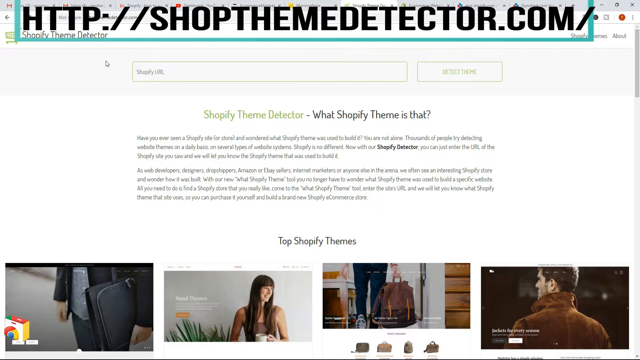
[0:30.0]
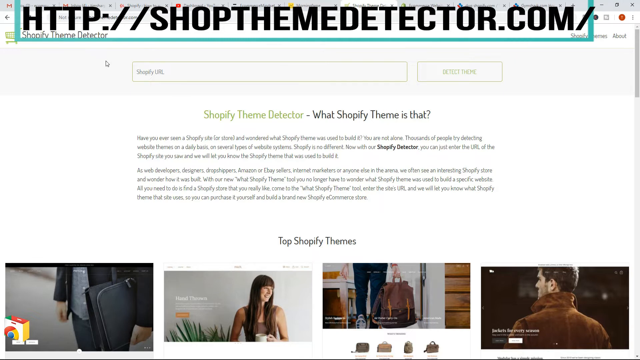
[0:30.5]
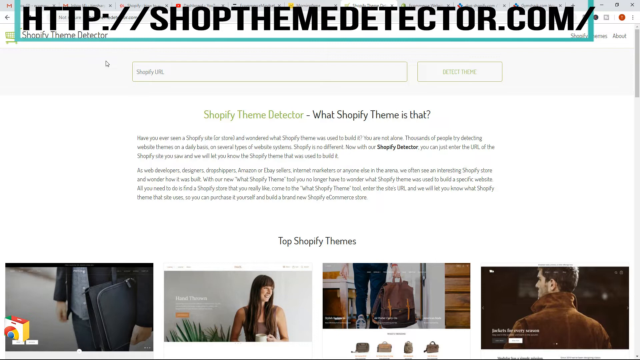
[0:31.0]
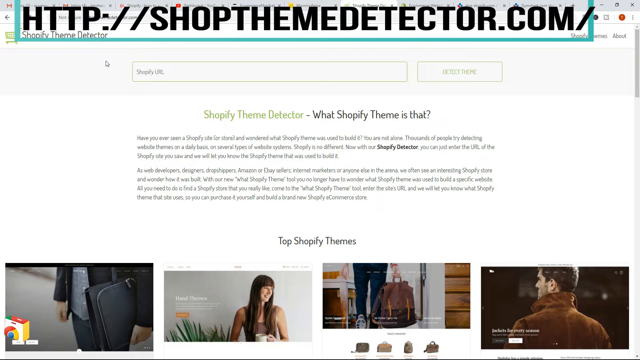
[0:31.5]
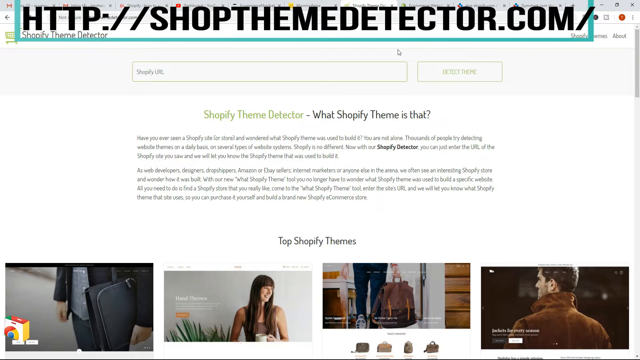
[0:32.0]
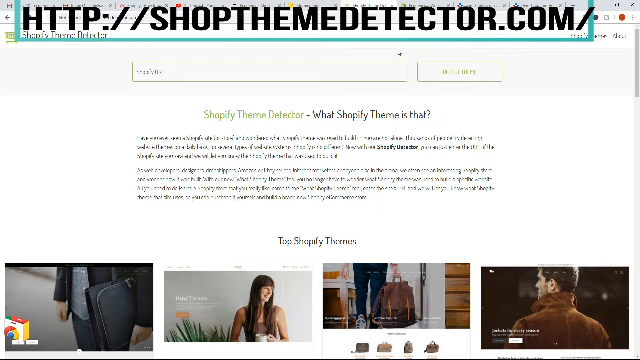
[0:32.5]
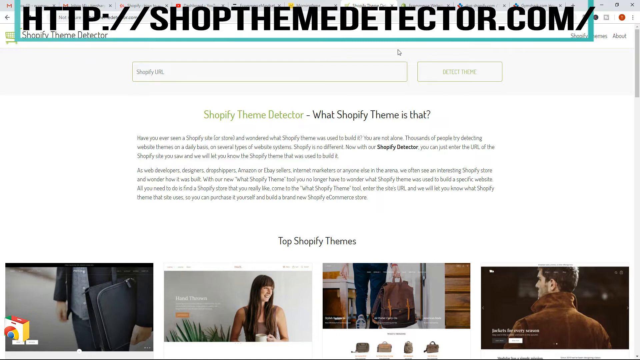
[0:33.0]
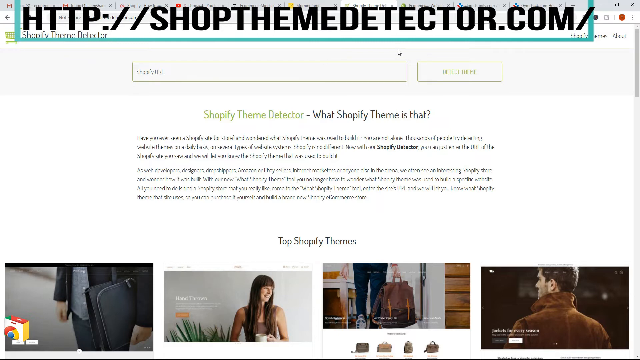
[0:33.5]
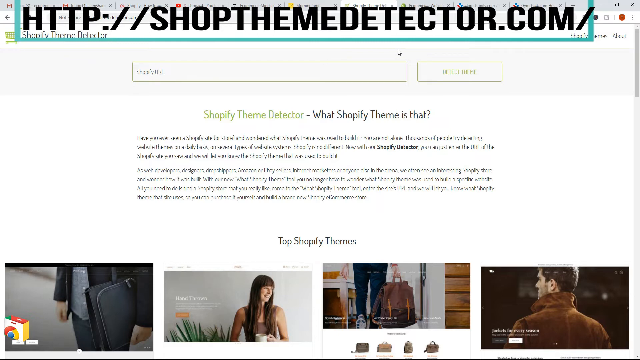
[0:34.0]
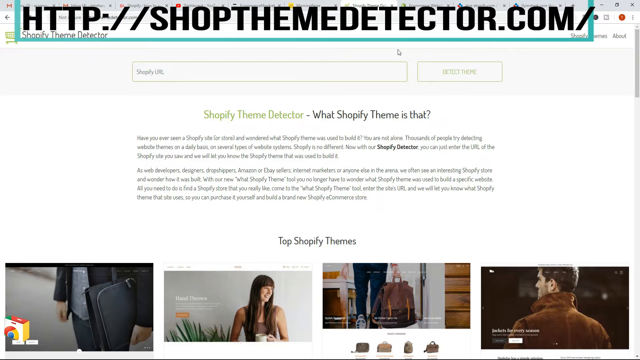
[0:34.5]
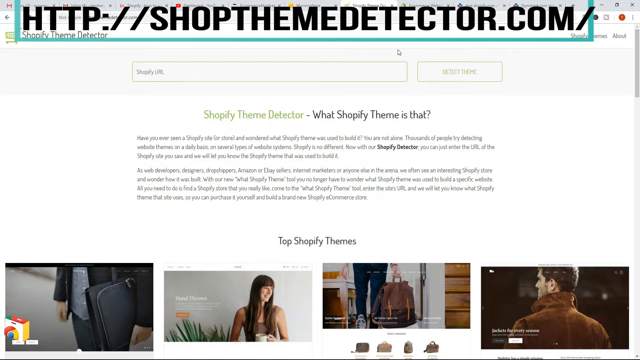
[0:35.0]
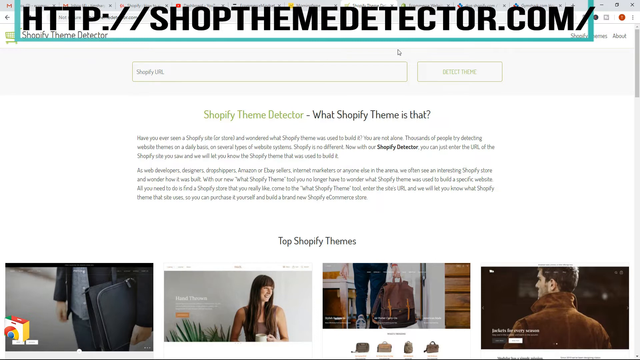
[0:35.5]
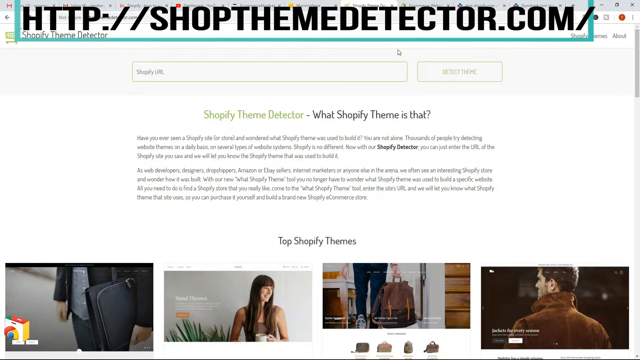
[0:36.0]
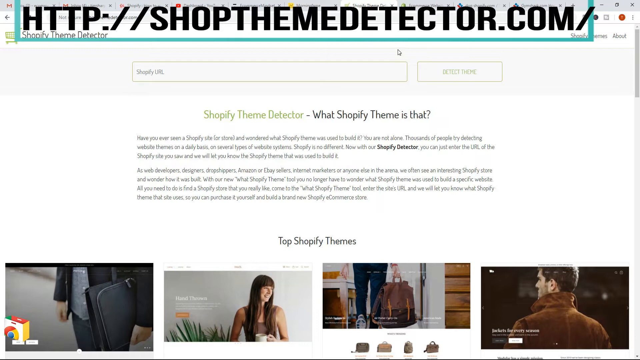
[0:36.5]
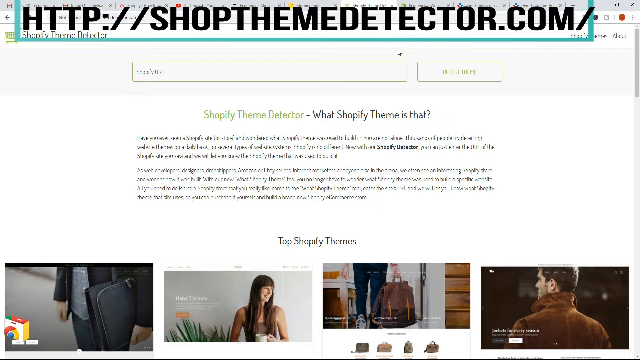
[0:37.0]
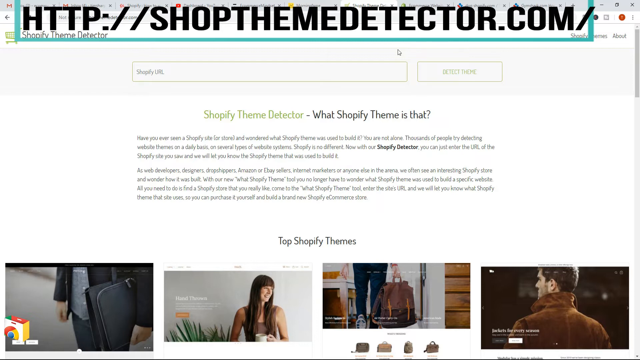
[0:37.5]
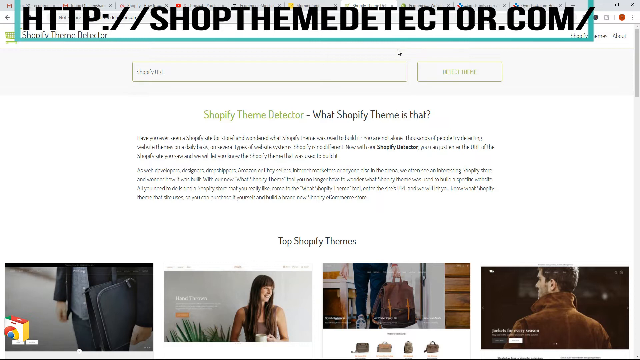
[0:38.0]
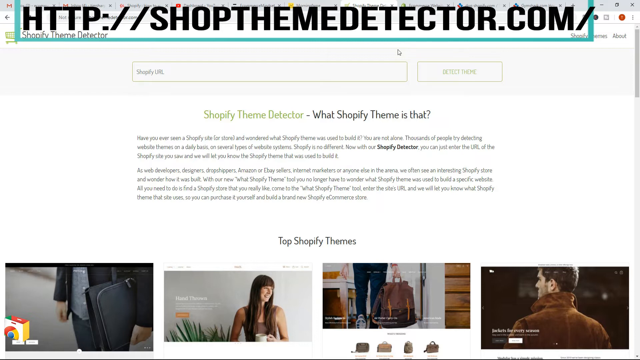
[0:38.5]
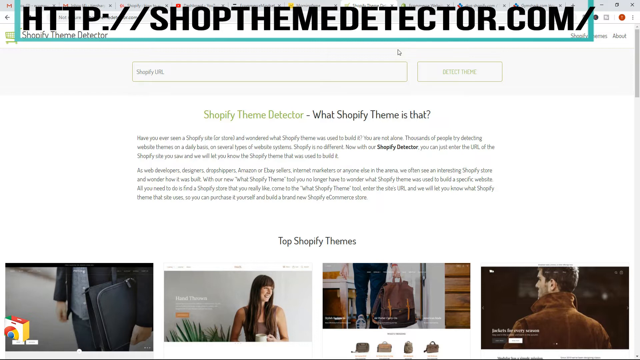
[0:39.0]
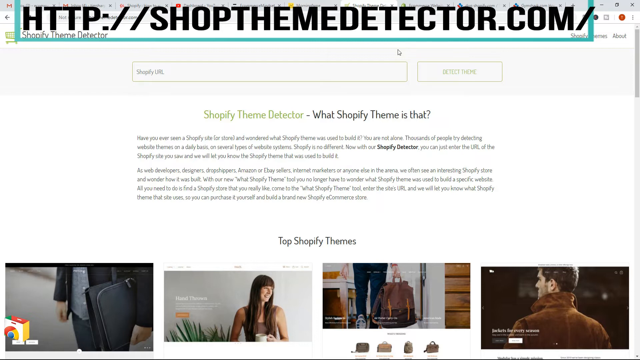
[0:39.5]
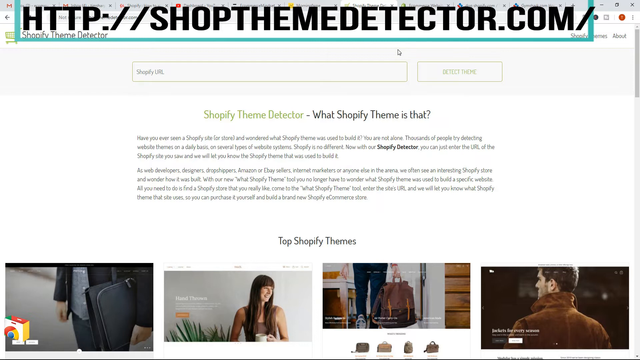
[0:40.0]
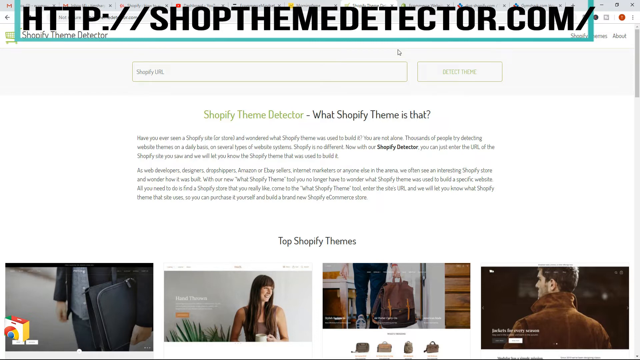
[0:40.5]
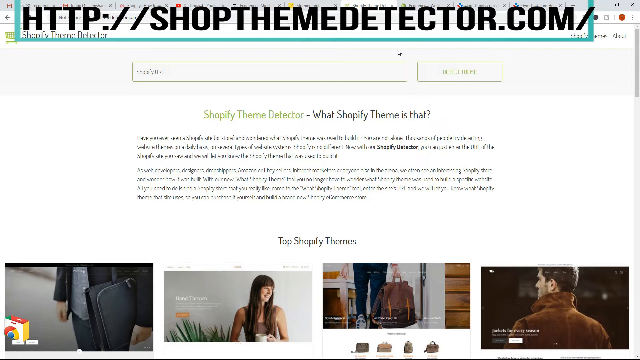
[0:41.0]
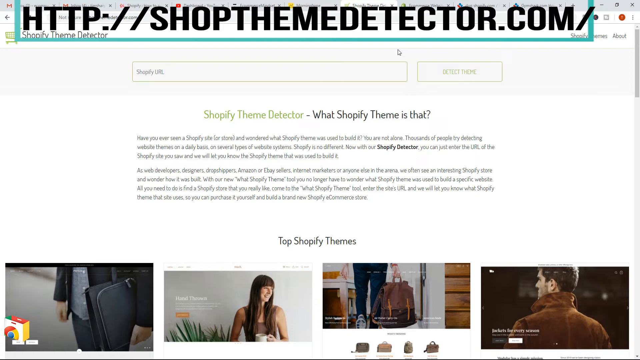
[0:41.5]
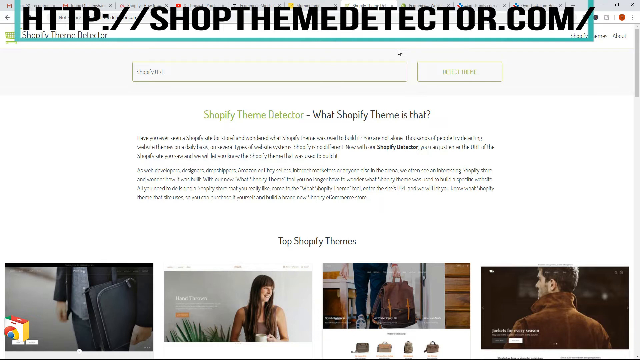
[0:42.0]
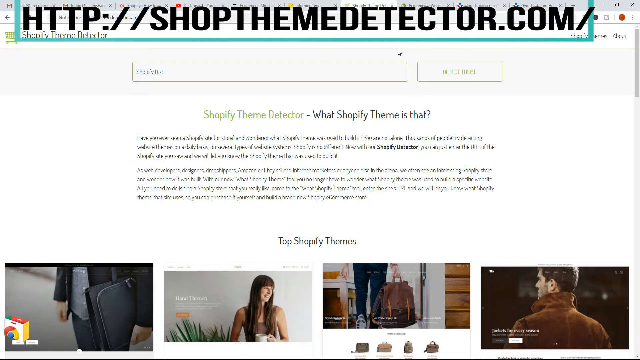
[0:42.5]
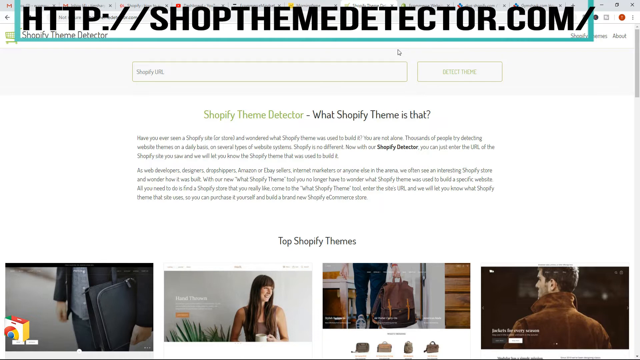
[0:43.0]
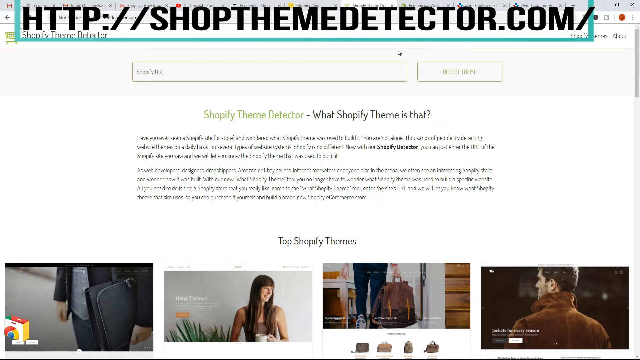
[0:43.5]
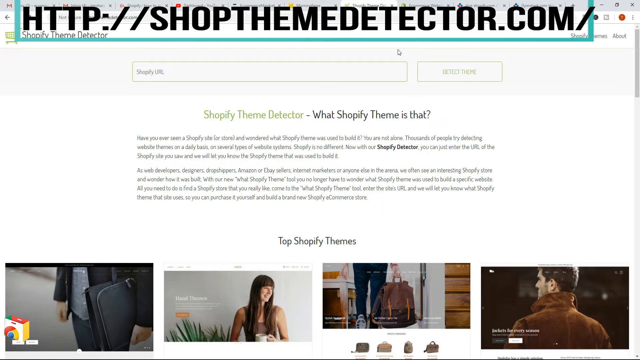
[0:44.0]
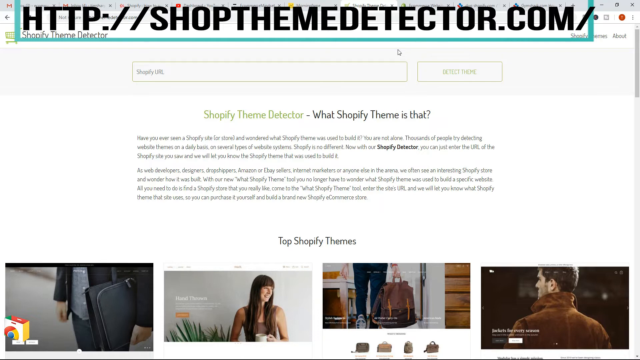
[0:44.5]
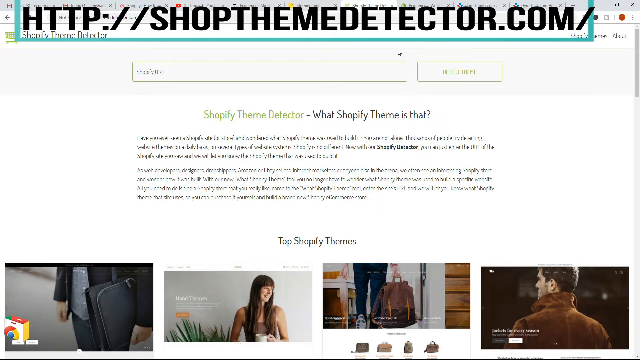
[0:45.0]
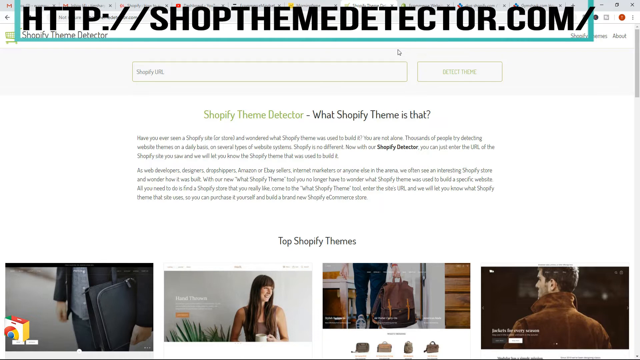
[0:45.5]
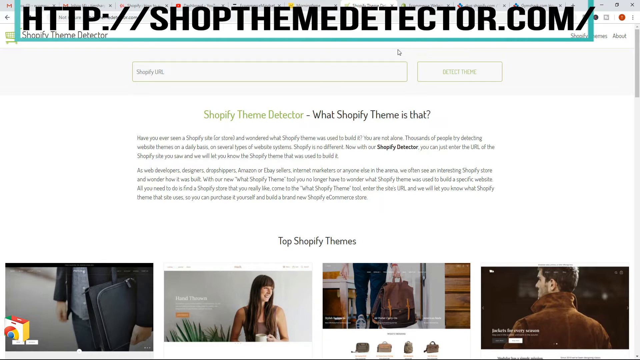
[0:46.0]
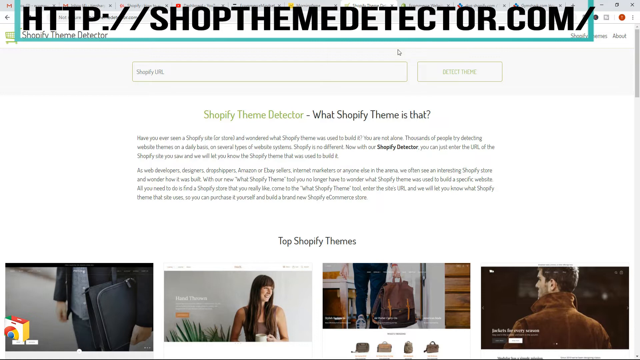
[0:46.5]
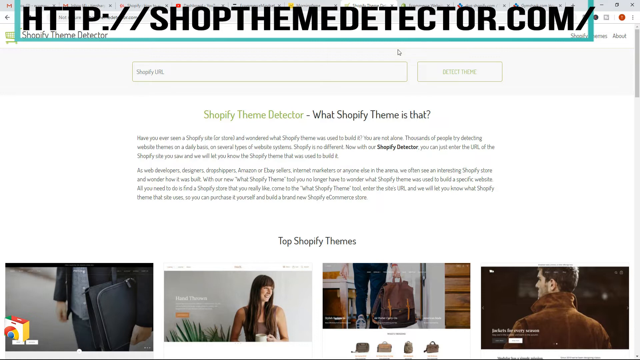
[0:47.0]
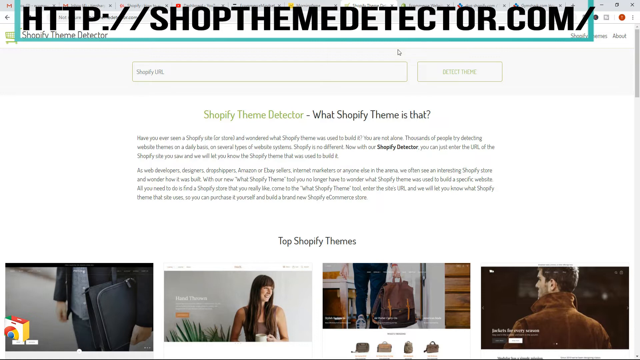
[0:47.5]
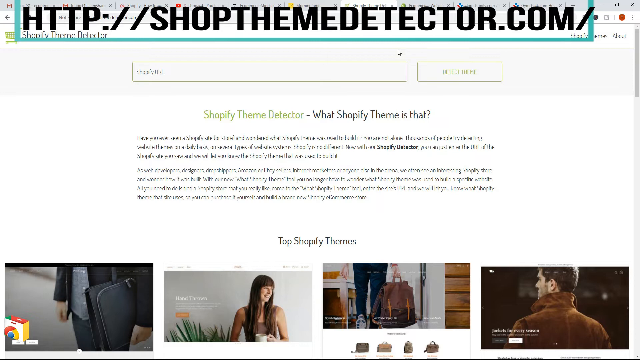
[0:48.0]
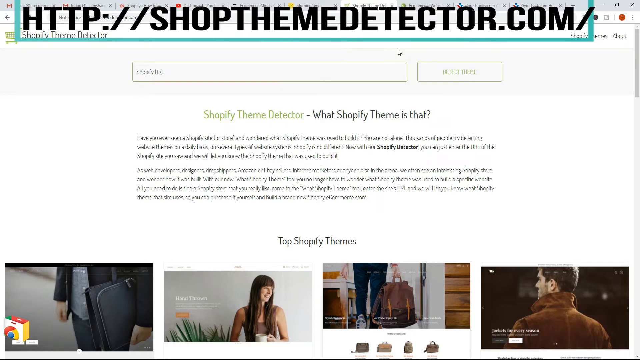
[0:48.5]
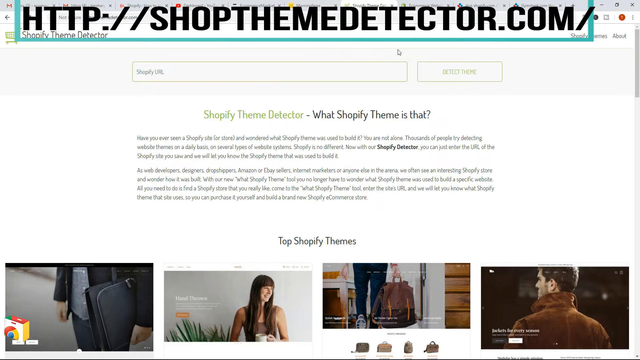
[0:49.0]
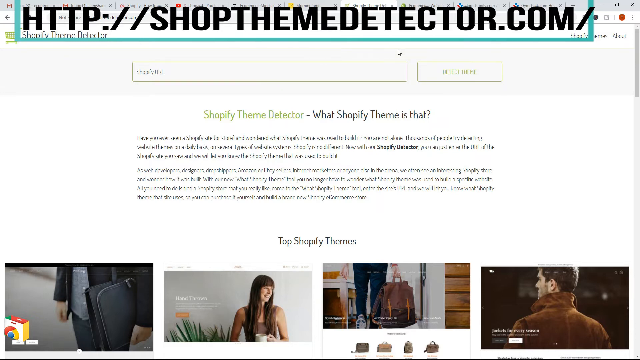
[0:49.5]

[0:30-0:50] The Shopify Theme Detector site, shopthemedetector.com, is on screen; it is a secure site.